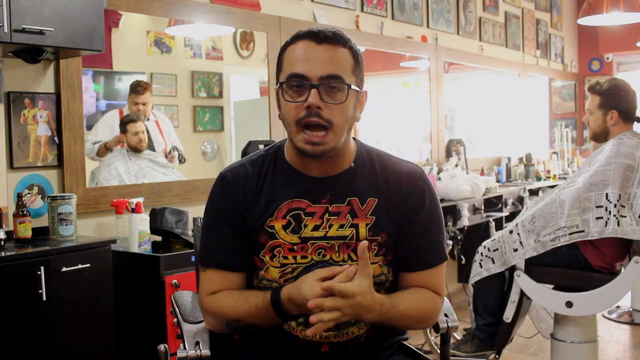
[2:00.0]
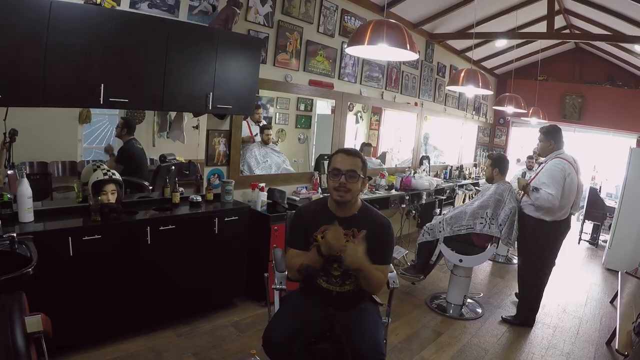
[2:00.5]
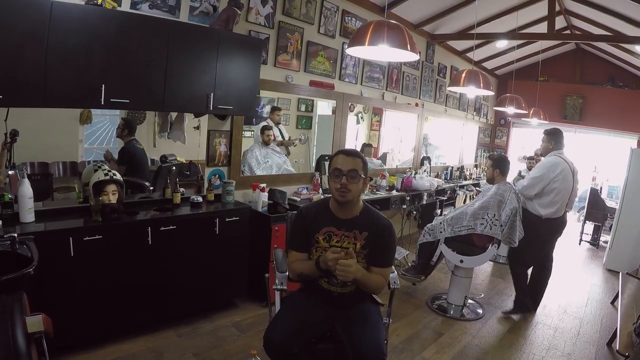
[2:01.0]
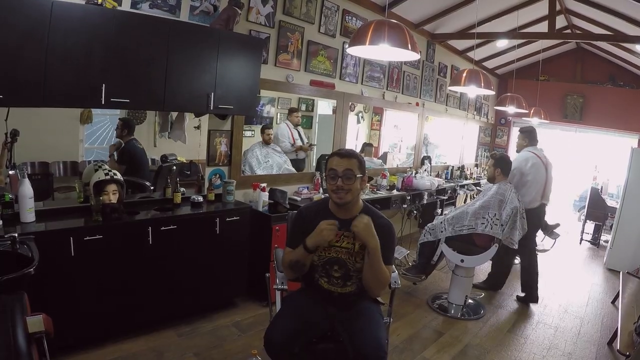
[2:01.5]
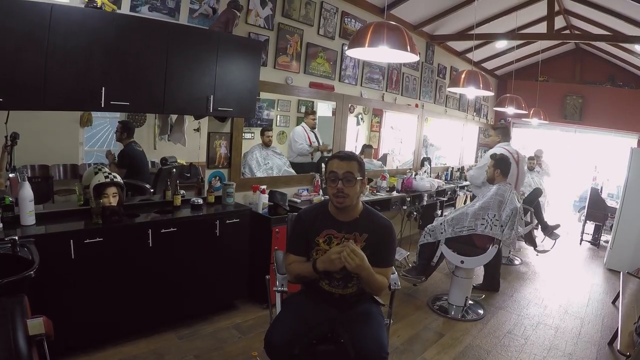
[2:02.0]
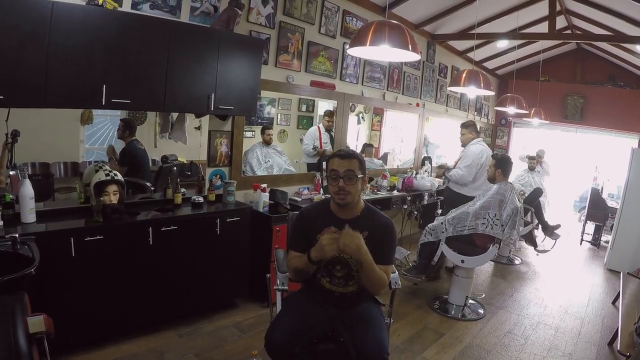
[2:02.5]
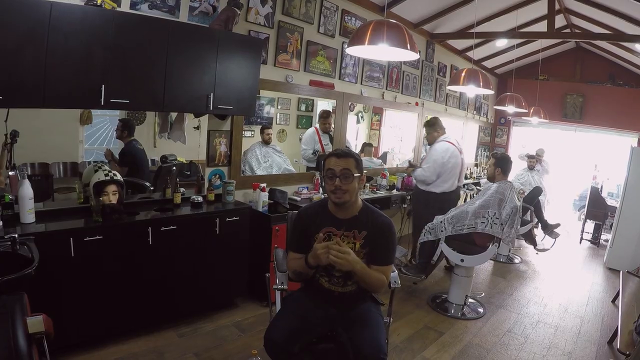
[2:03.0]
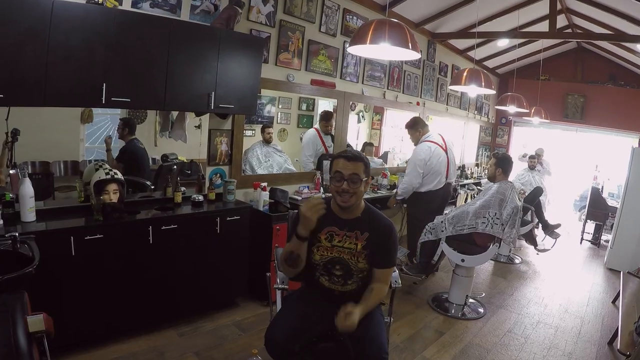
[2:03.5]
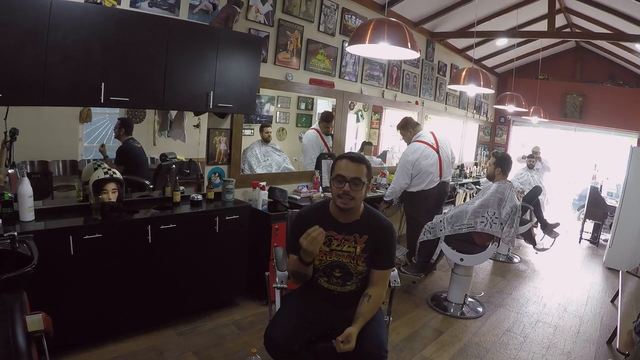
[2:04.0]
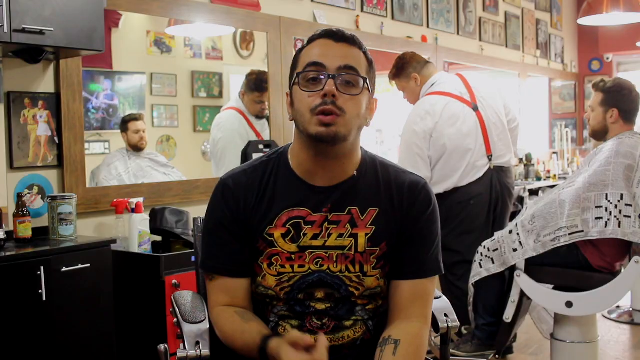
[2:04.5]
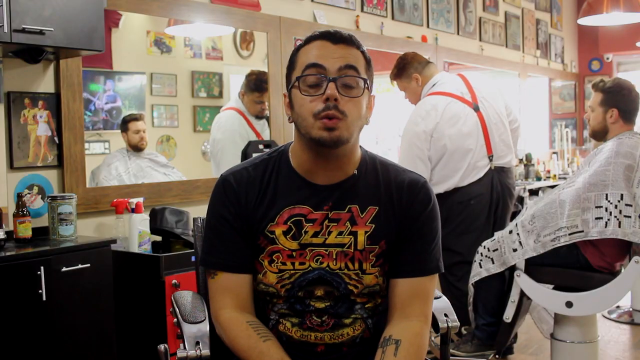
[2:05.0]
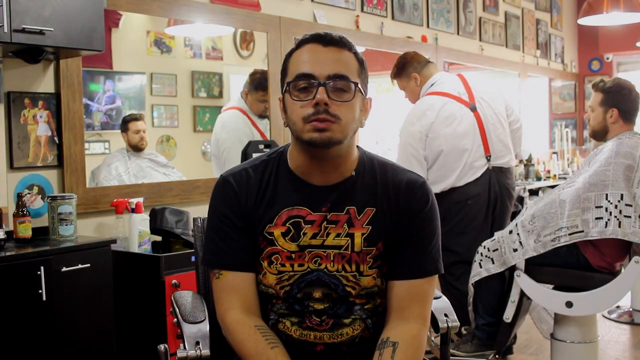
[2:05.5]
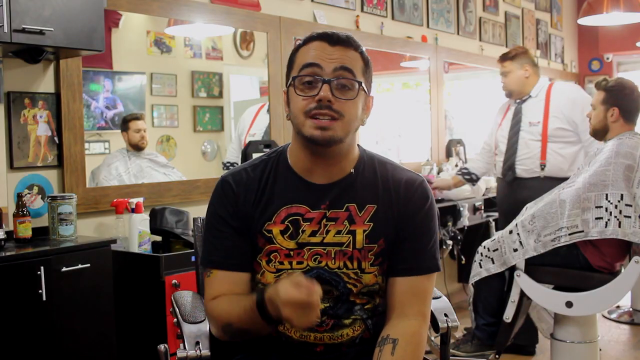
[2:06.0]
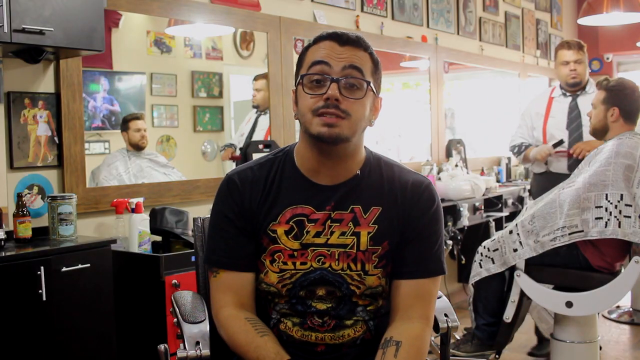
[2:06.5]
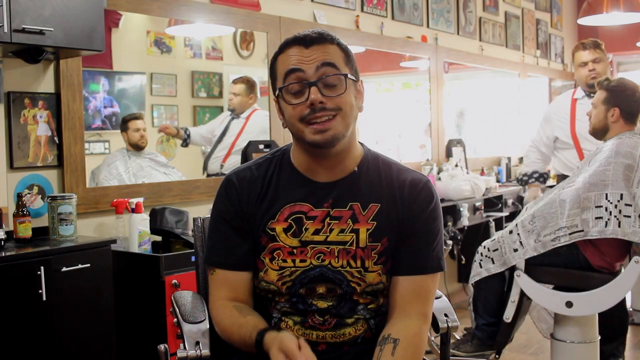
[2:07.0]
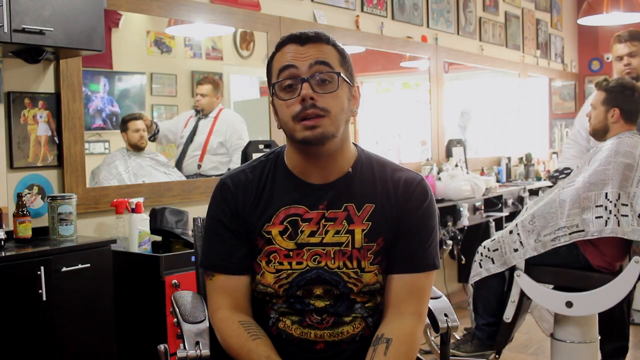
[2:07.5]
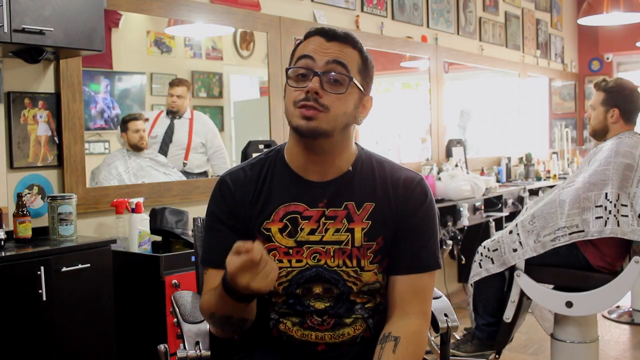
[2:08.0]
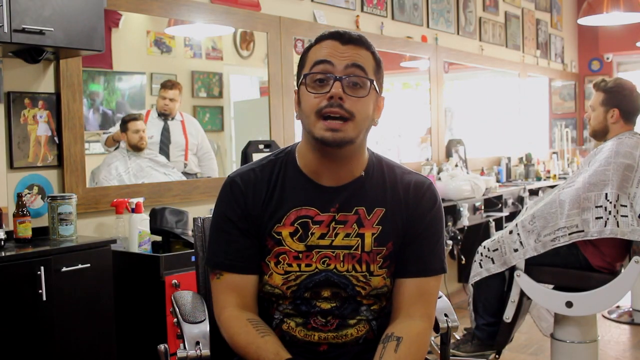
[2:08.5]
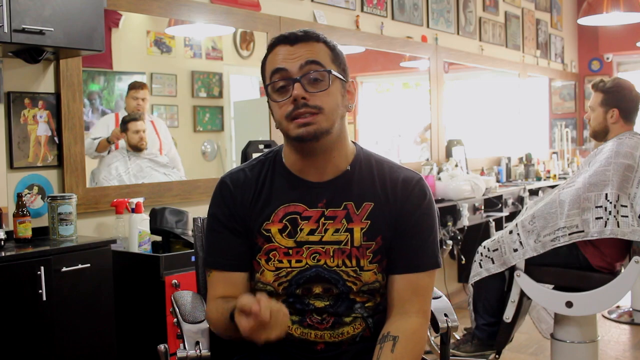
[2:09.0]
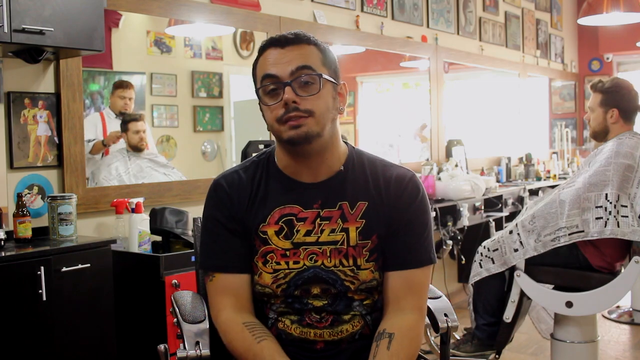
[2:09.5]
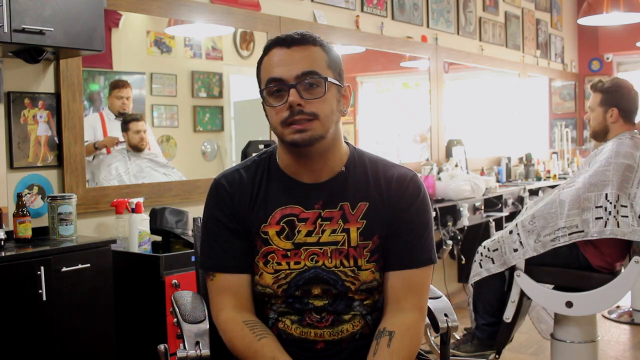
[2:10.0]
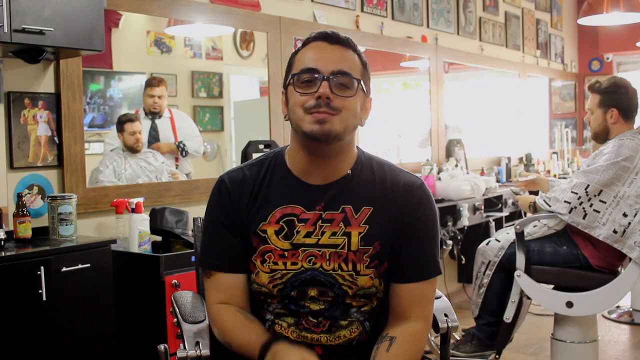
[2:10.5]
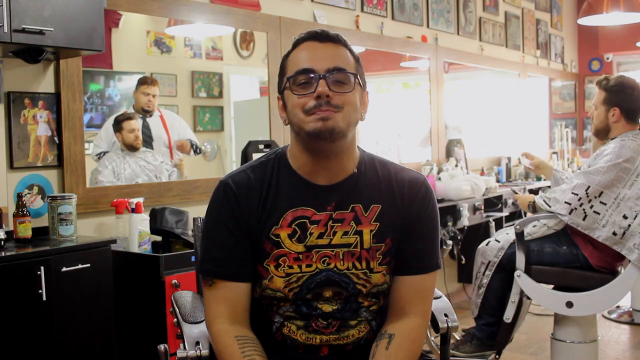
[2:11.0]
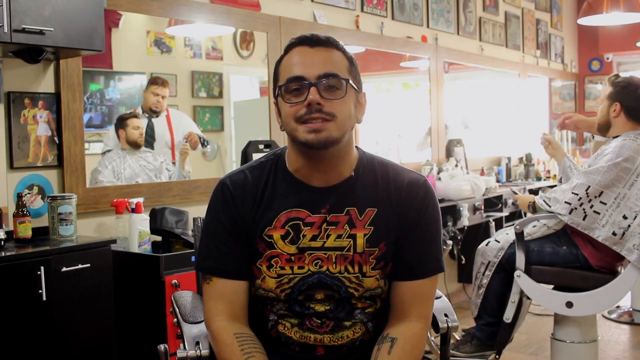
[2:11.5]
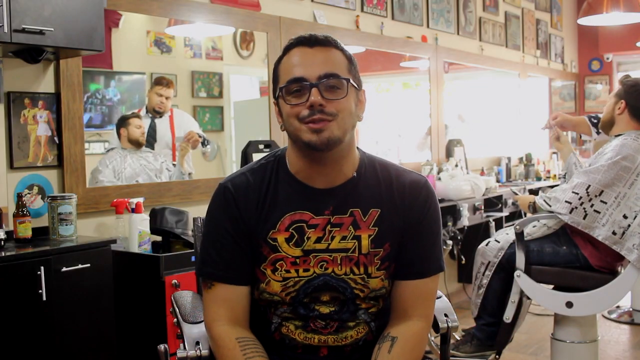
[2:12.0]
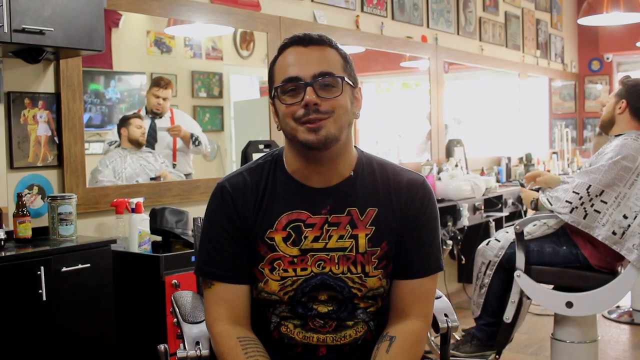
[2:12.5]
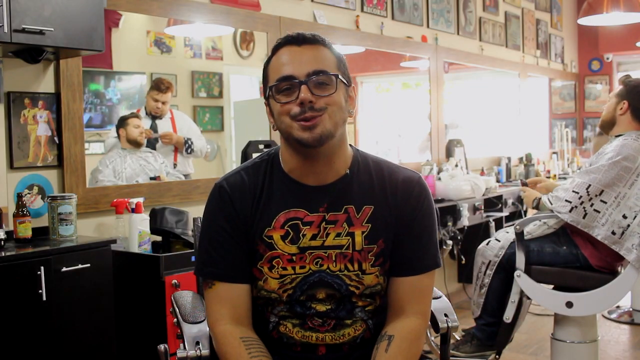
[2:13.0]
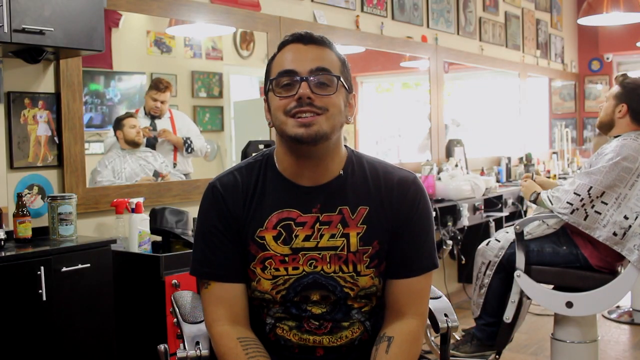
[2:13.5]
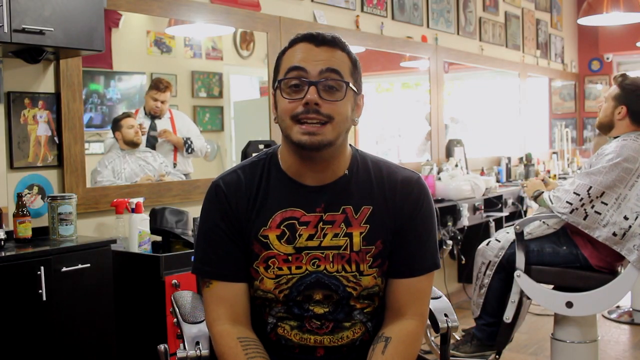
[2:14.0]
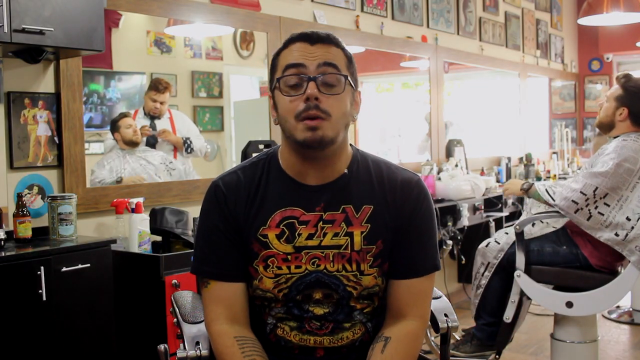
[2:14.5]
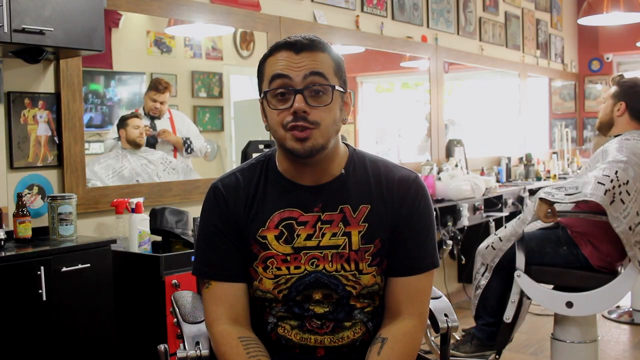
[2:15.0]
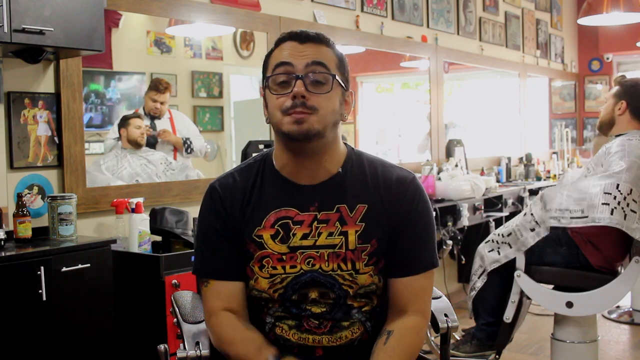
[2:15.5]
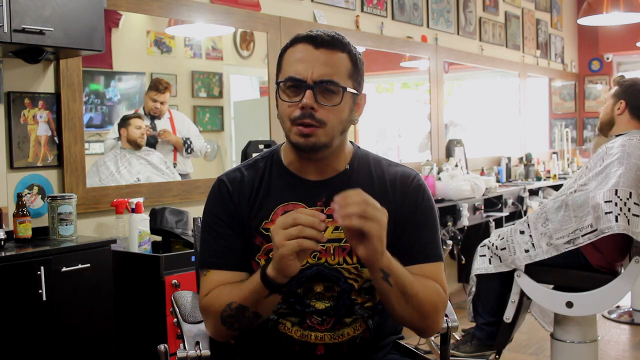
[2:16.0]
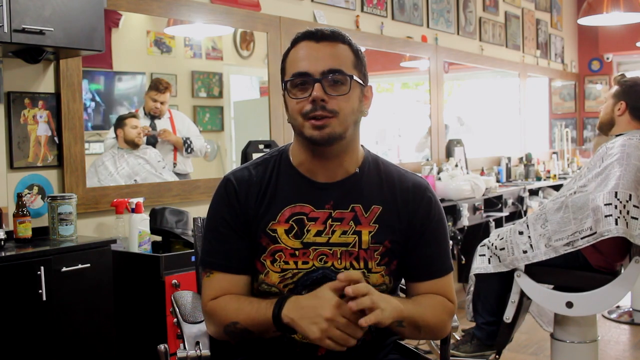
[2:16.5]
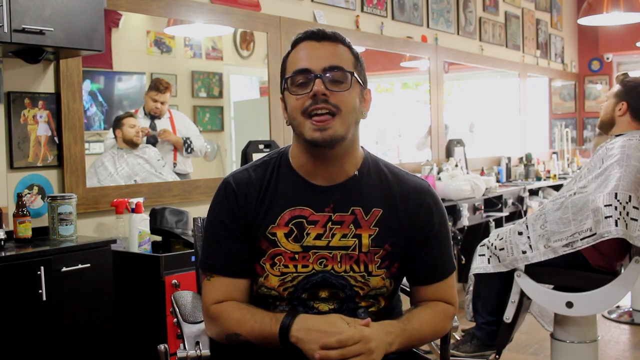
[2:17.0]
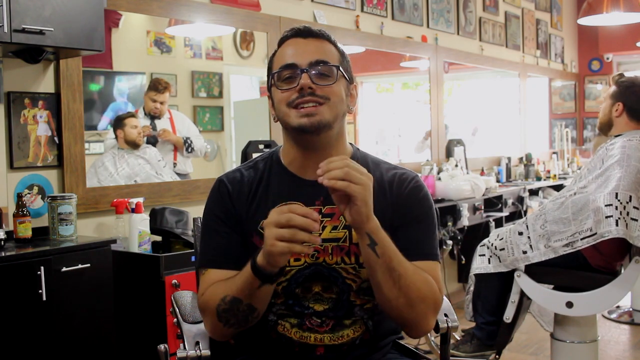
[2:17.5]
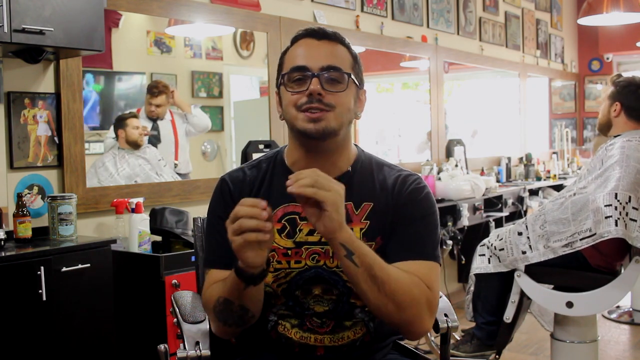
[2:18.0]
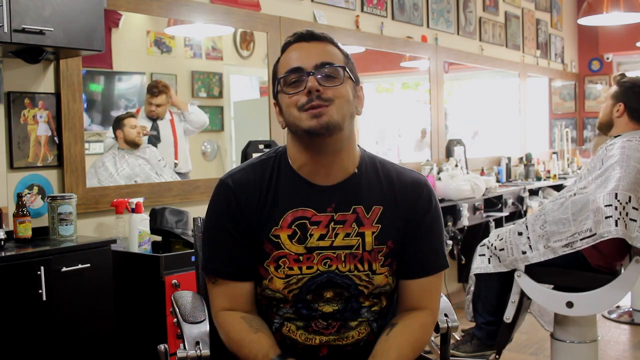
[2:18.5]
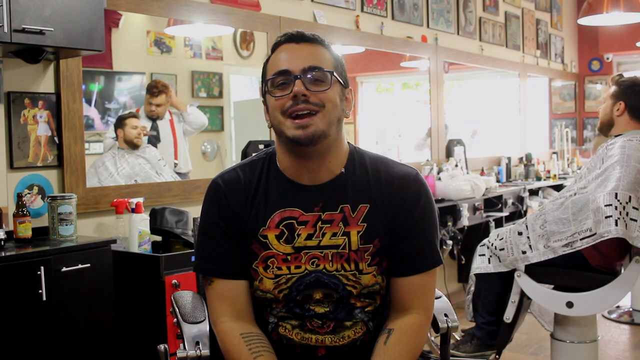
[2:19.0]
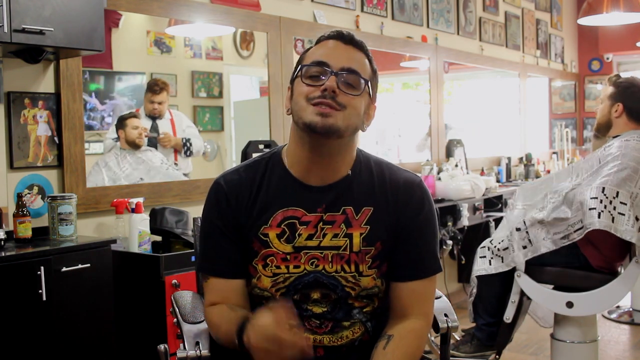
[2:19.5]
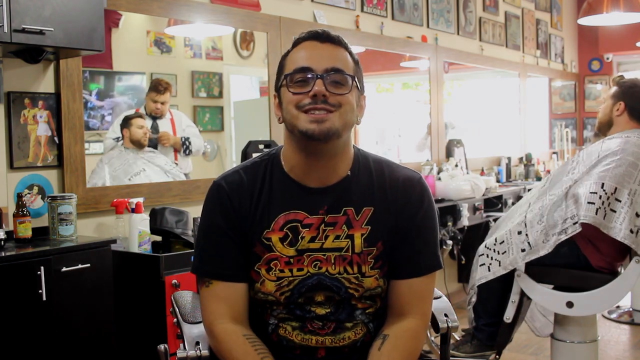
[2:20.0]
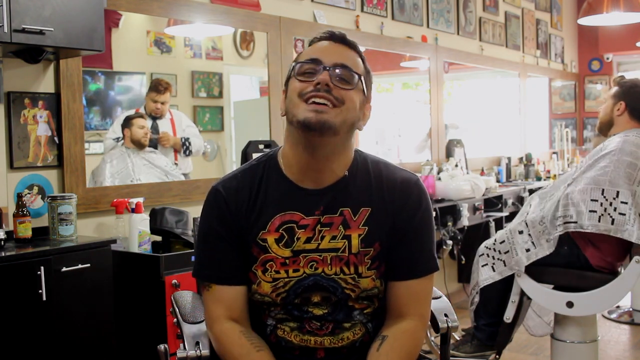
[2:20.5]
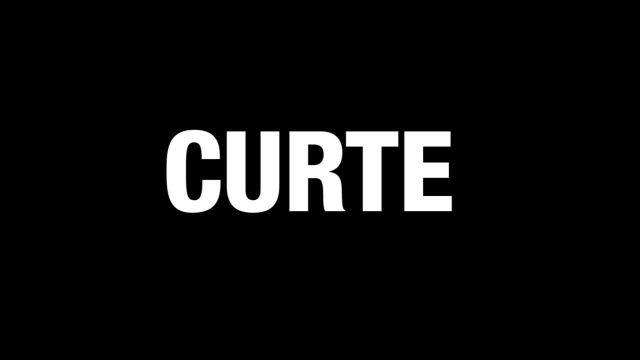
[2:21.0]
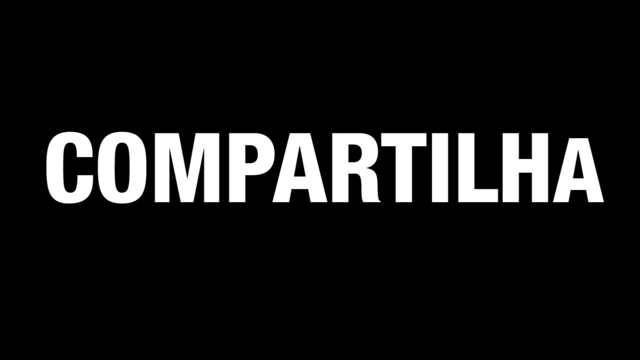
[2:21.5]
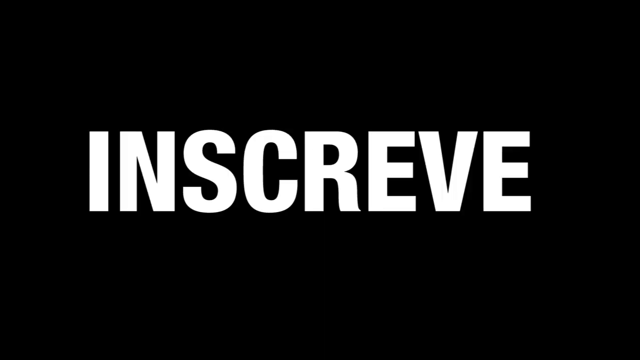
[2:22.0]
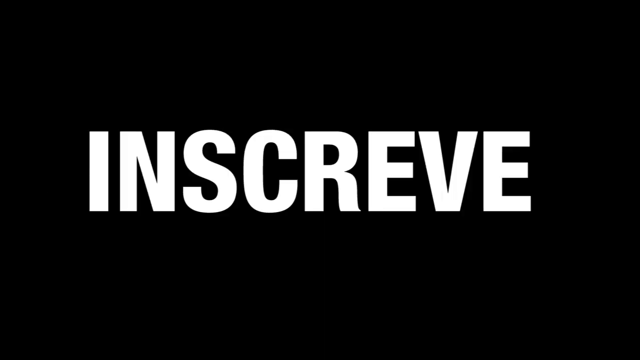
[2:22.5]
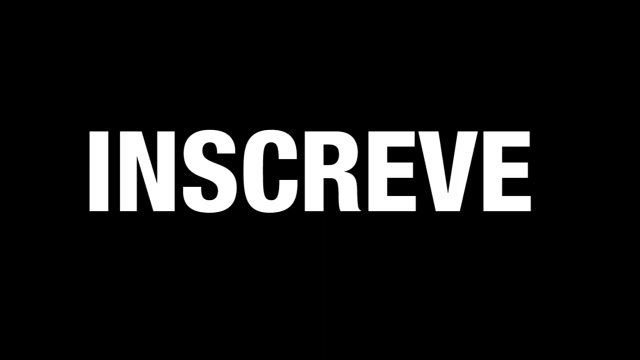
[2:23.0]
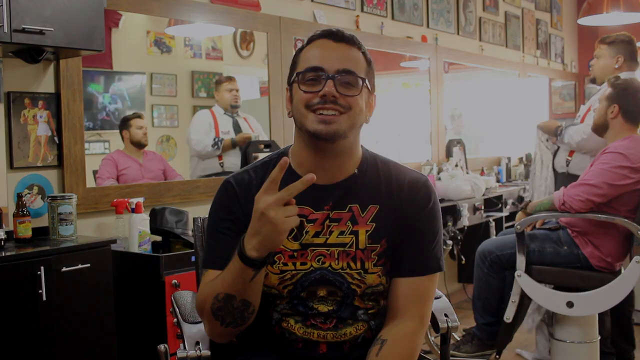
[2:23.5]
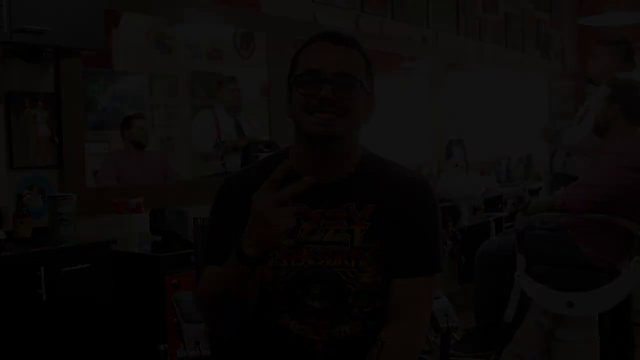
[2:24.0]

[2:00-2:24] A man in black clothes and glasses is sitting on a chair recording a video, apparently talking about the place he is in, which looks like a salon. A man is lying there while a salon worker in a white shirt and black tie does his beard. In the background is a lady in a red top and black trousers. Picture frames are all over the room, and there are brown cardboards with some decoration on top. The seated man leads the video as the presenter, showing things and speaking using body language. Only the background and the camera angle change.